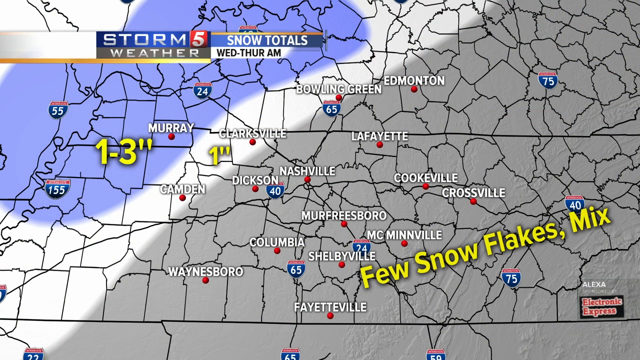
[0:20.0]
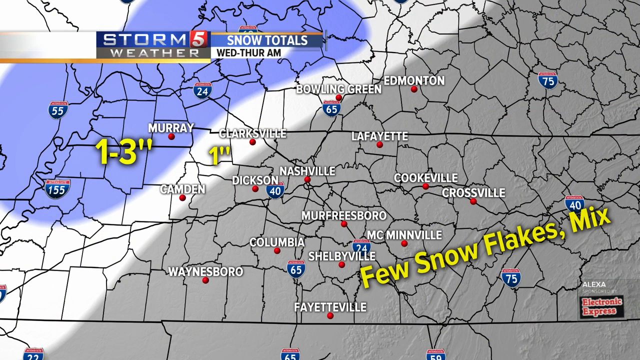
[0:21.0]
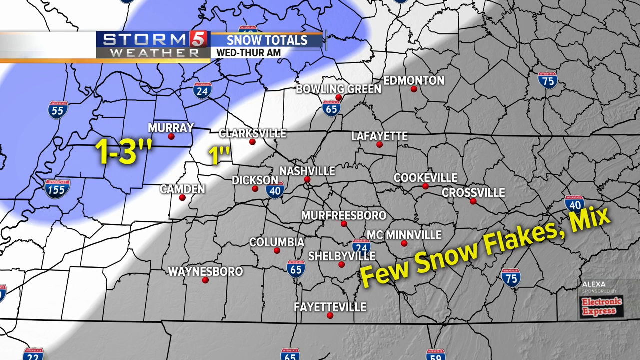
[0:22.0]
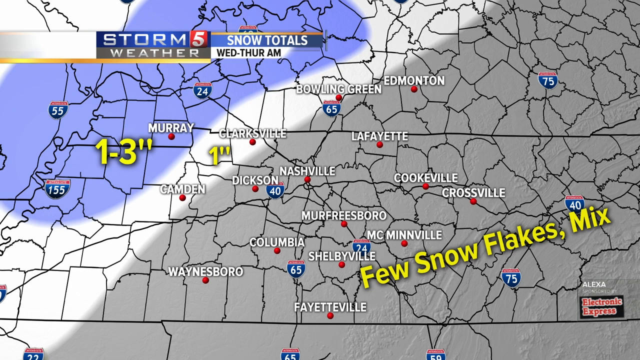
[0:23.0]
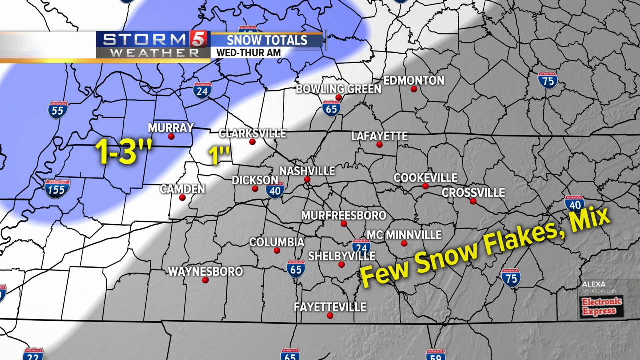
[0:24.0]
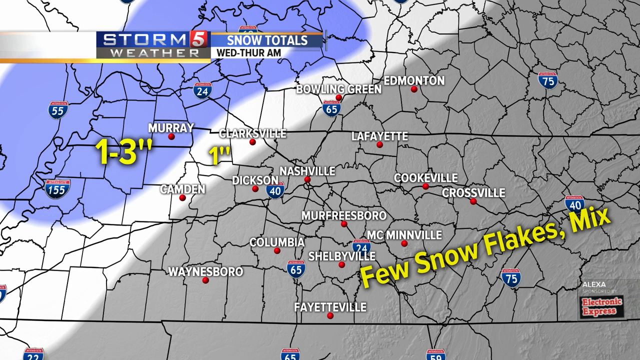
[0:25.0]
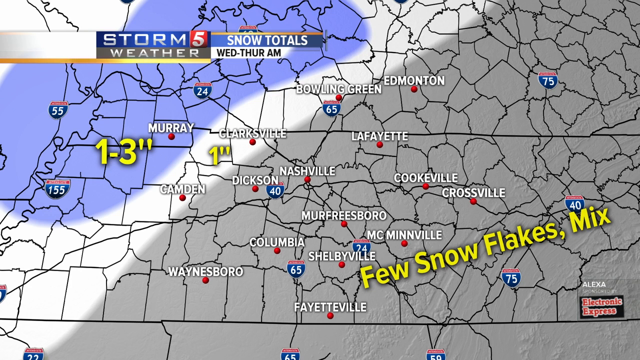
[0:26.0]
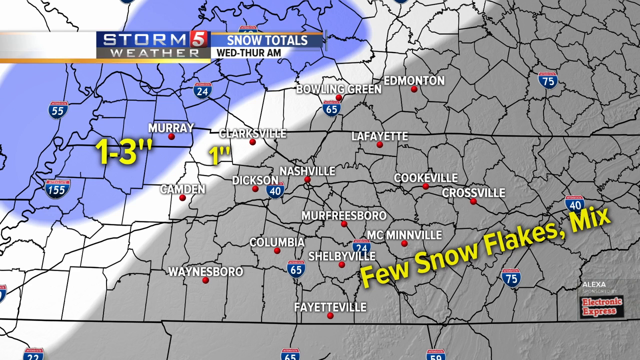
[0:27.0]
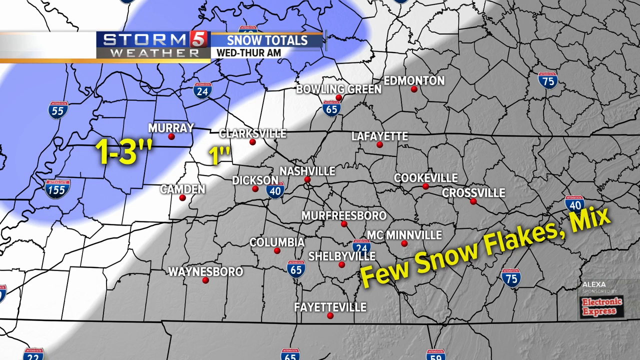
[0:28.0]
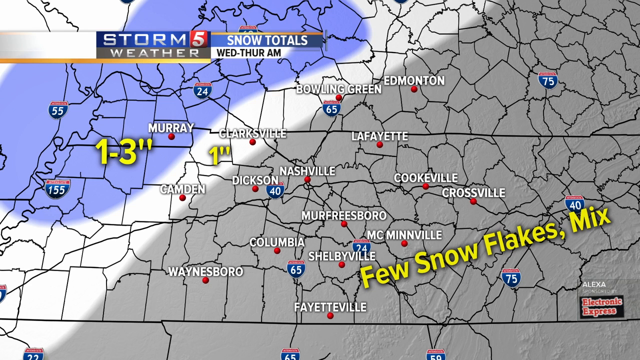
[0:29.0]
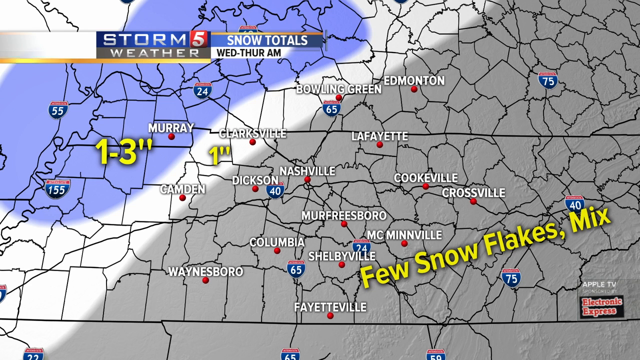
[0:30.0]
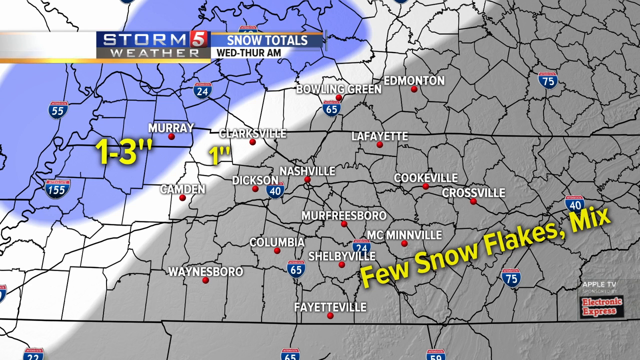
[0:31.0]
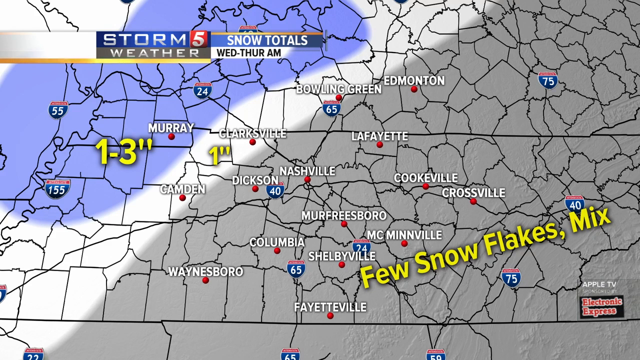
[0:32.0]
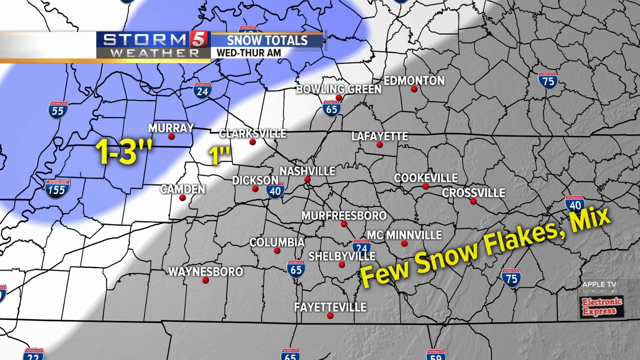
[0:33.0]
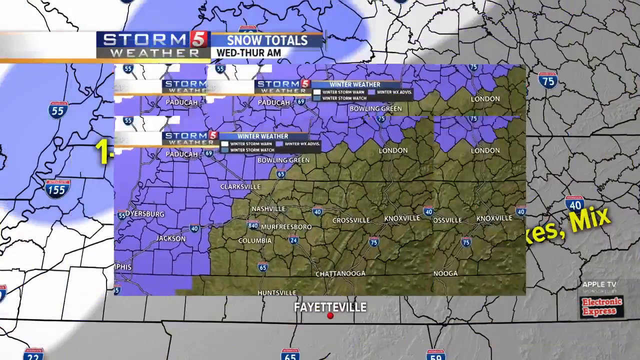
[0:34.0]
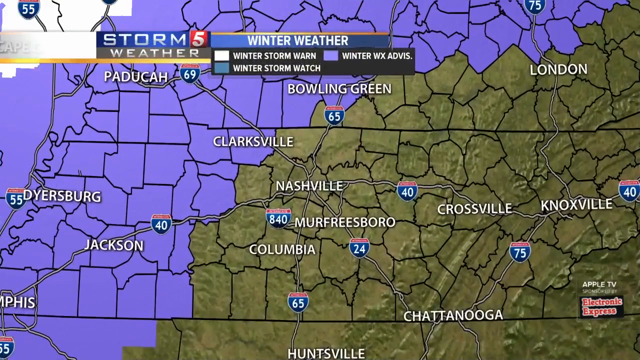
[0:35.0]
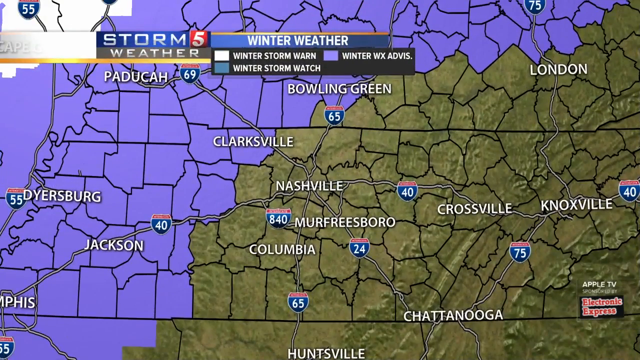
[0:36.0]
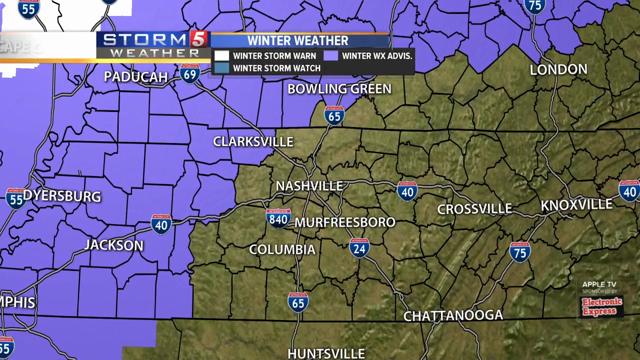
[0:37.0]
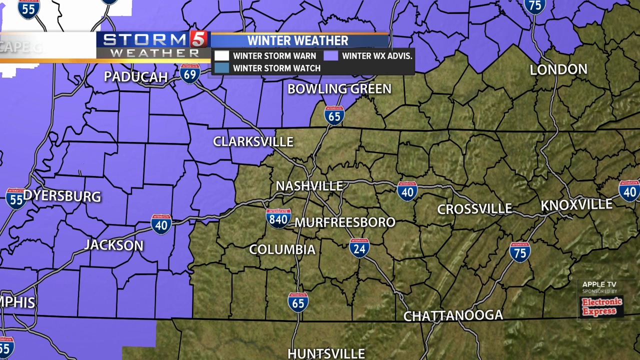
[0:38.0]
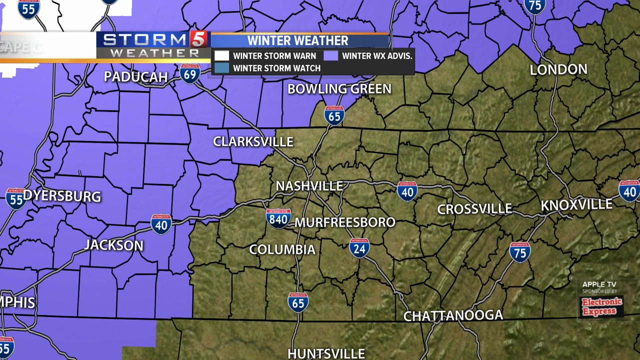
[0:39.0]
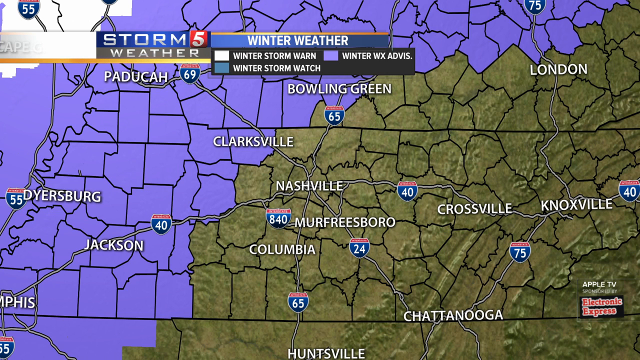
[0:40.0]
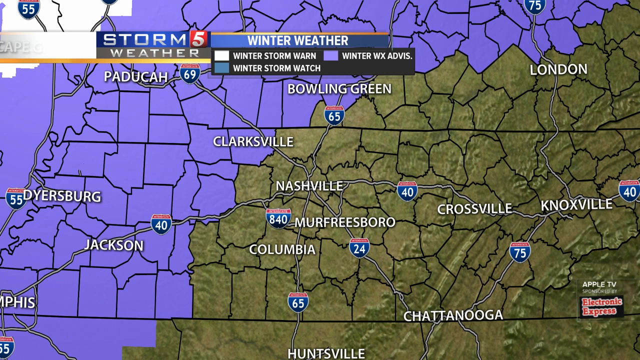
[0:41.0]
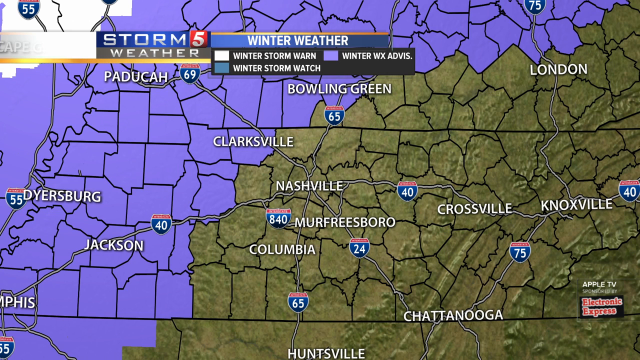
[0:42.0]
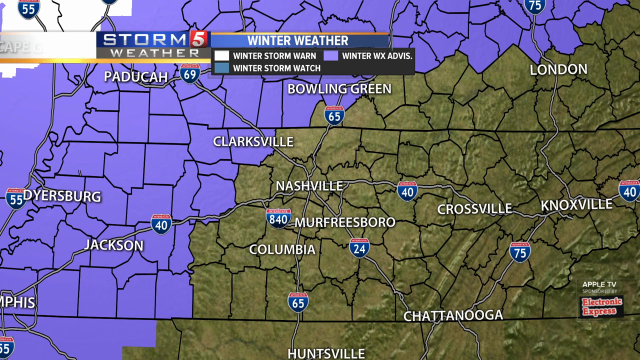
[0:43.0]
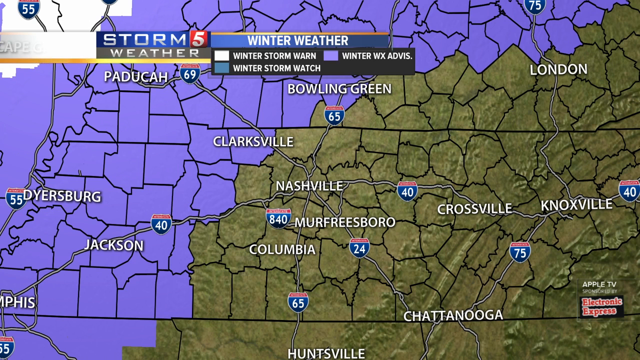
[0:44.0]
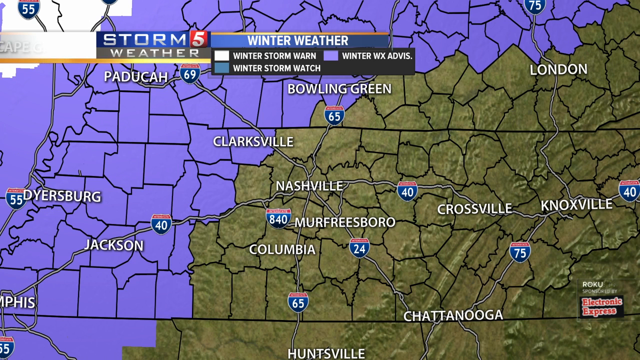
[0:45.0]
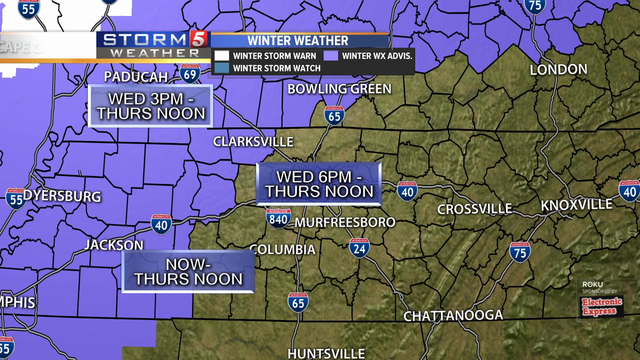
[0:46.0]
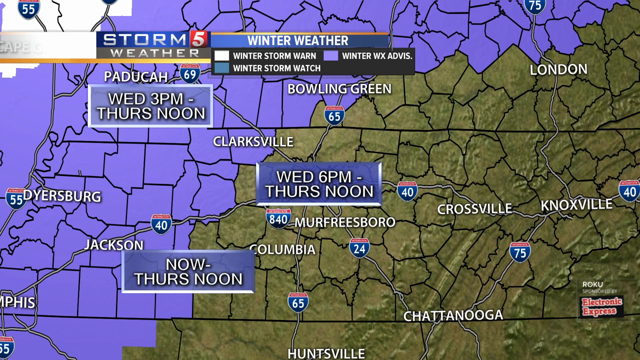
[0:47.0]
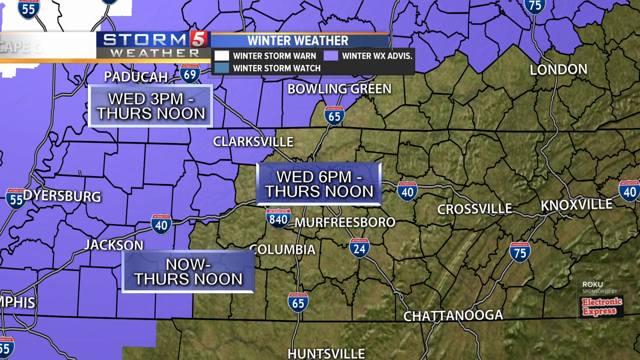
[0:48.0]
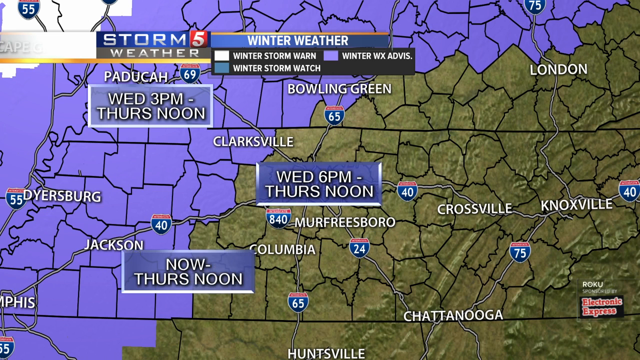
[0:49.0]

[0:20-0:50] "Top of the town" is written on the screen. The weather forecast for different areas shows a few snowflakes mixed in, with grayish and blue colors on the map. A winter storm warning and a winter storm watch are shown for areas such as Darrisburg, Jackson, Columbia, Crossview, Knoxville and London, including Dresberg. The report covers Wednesday and Thursday afternoon, with times of Wednesday 3 PM and Thursday noon. Many snowflakes appear, and a winter storm warning is reported for the city.